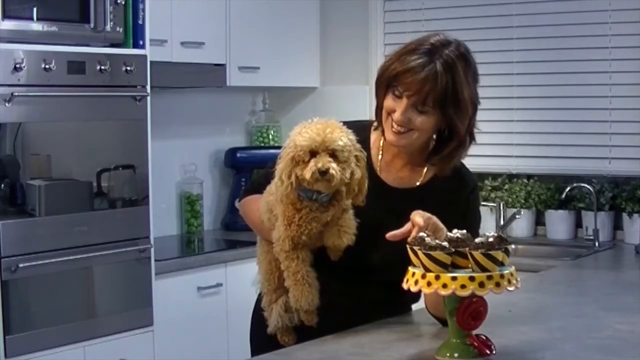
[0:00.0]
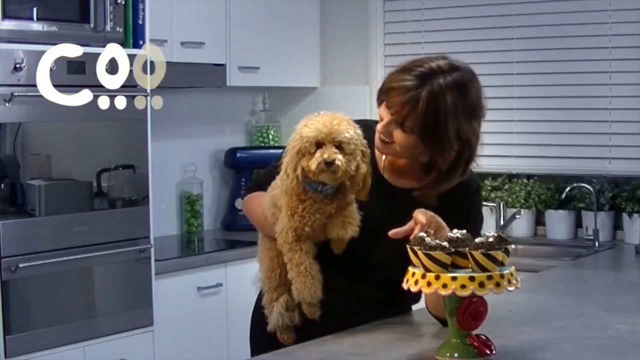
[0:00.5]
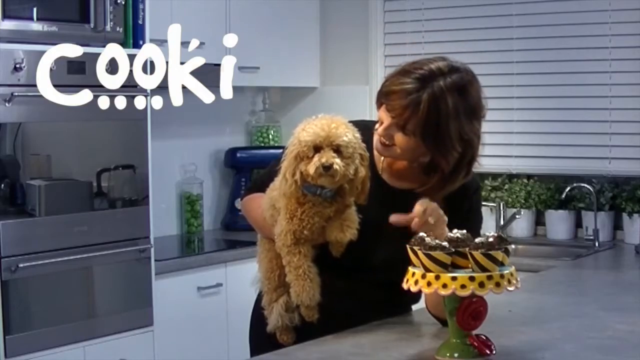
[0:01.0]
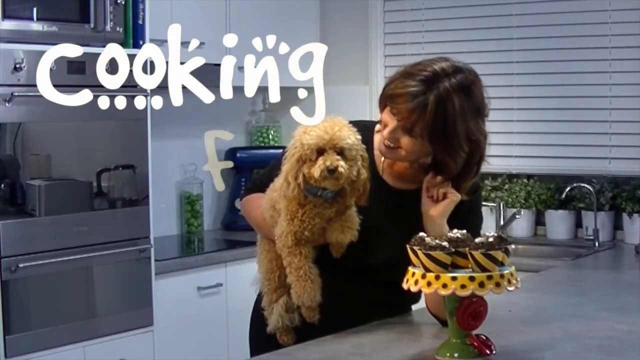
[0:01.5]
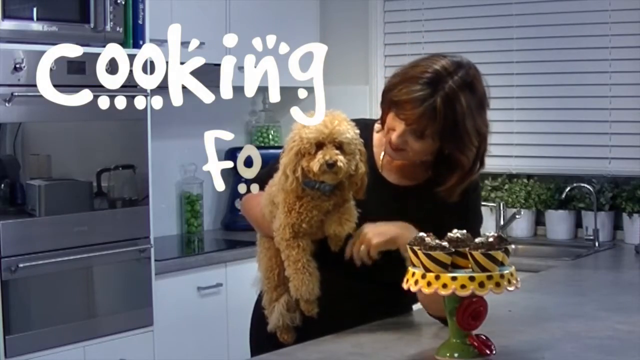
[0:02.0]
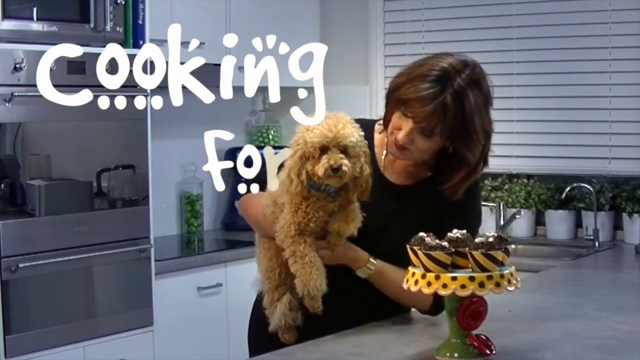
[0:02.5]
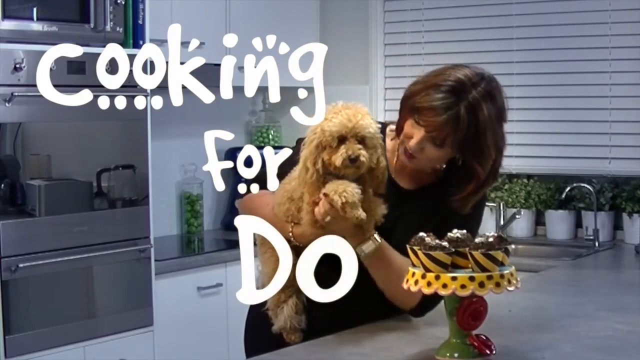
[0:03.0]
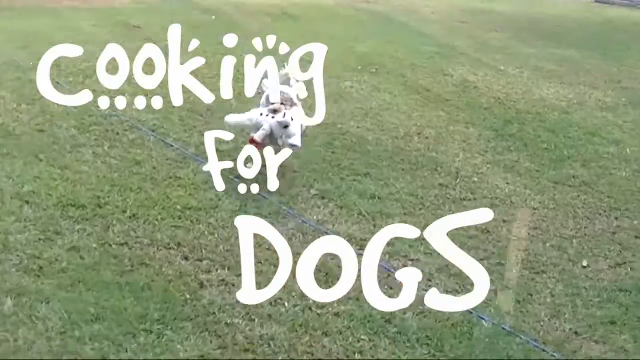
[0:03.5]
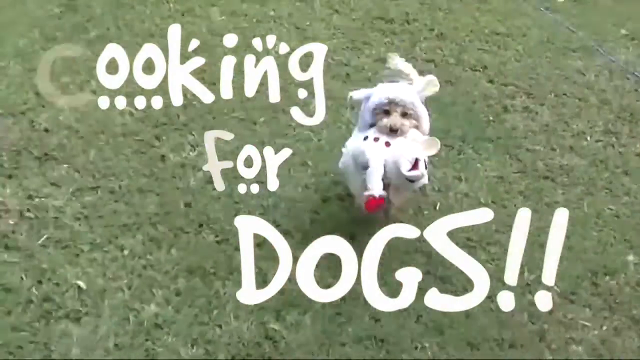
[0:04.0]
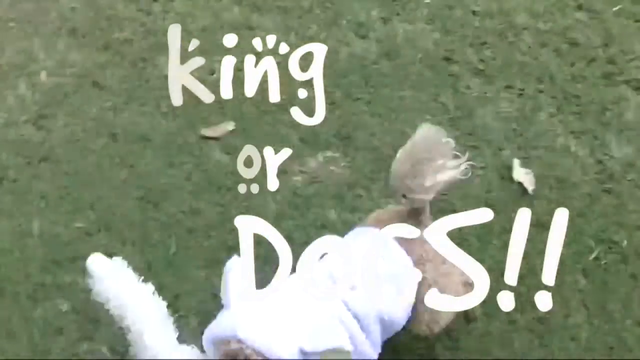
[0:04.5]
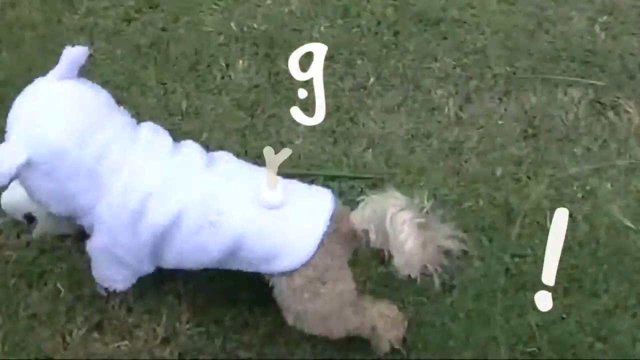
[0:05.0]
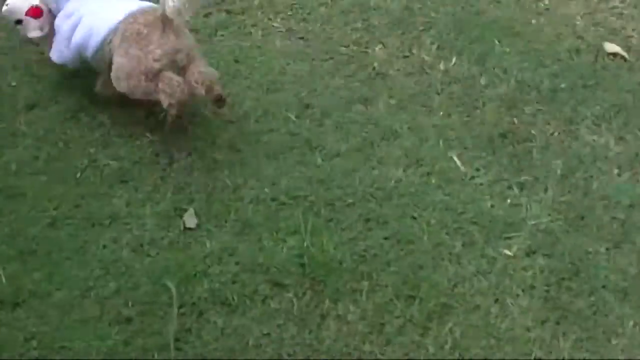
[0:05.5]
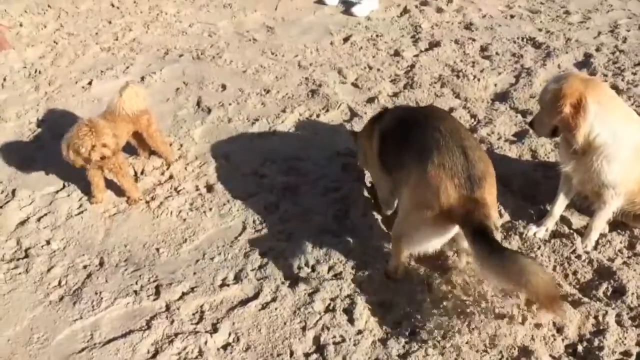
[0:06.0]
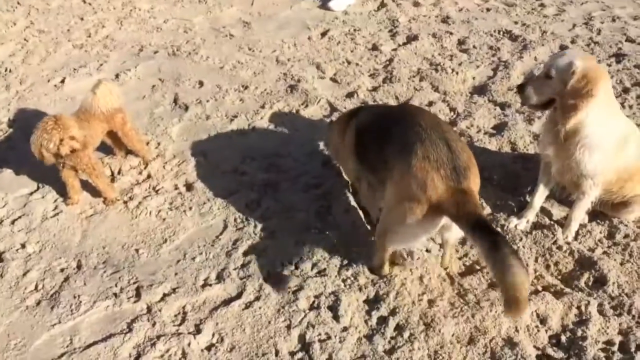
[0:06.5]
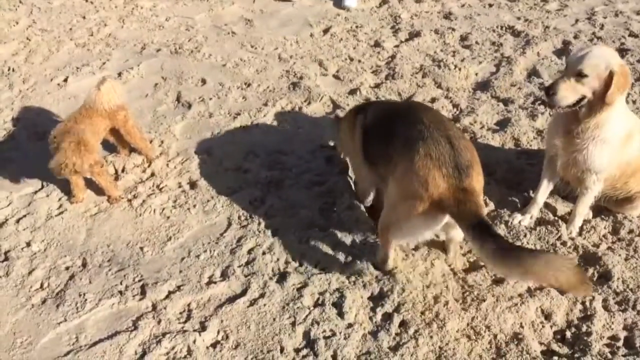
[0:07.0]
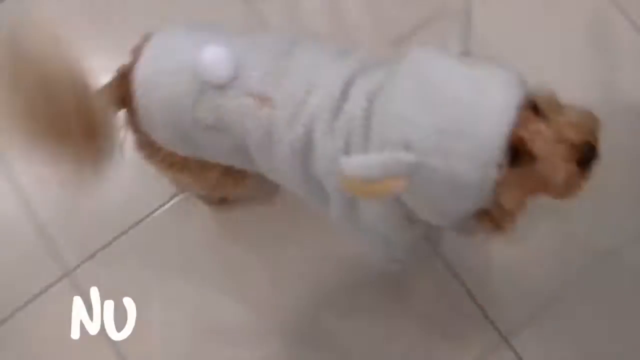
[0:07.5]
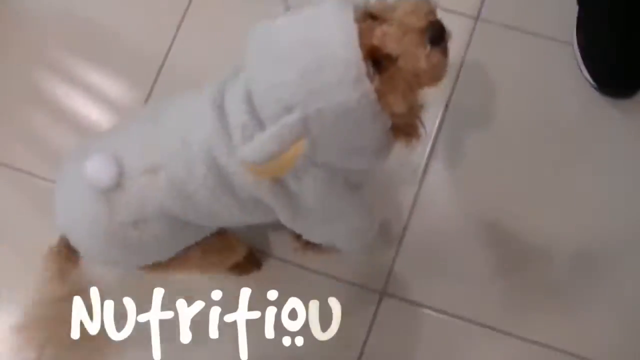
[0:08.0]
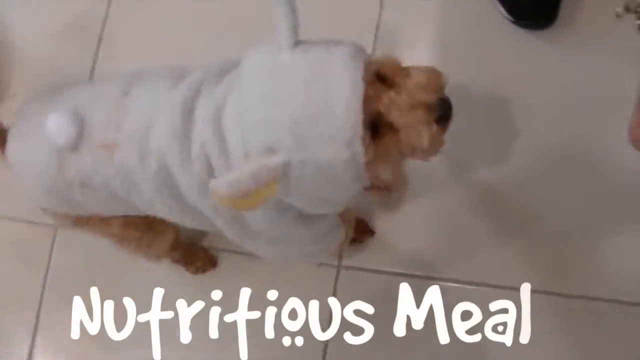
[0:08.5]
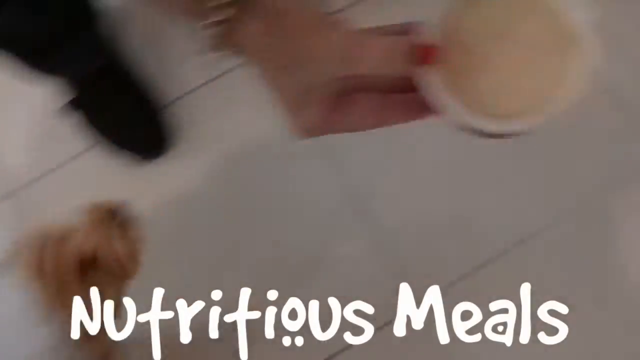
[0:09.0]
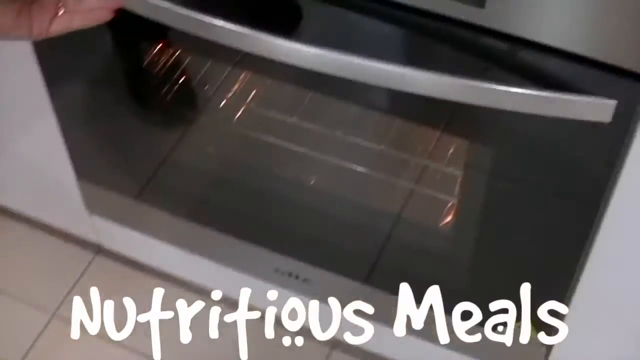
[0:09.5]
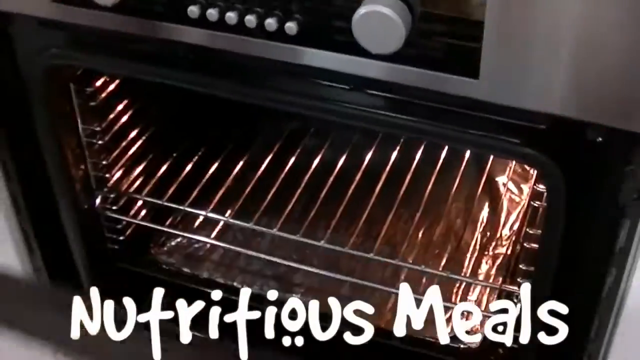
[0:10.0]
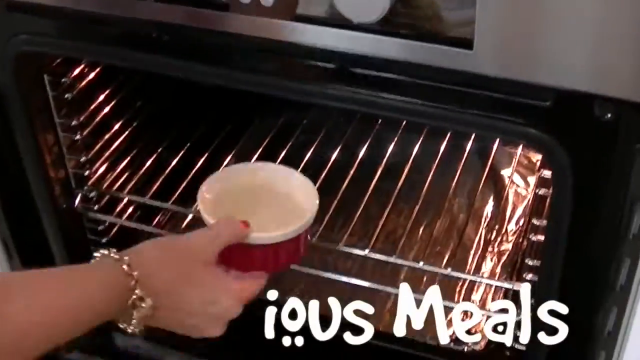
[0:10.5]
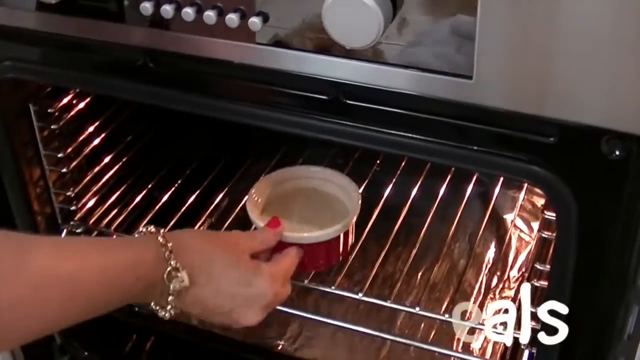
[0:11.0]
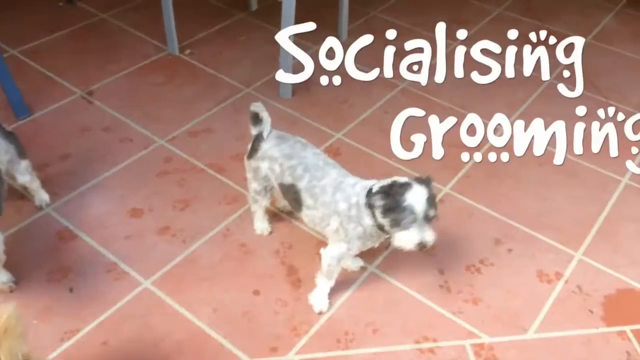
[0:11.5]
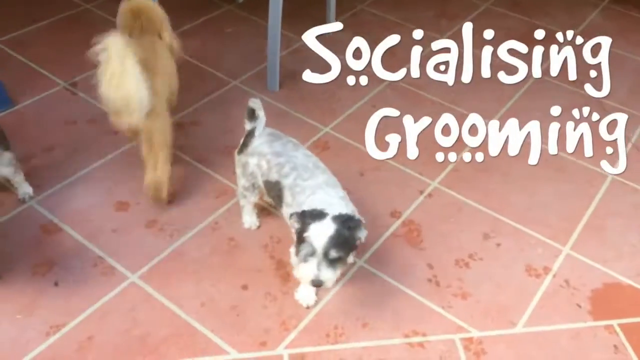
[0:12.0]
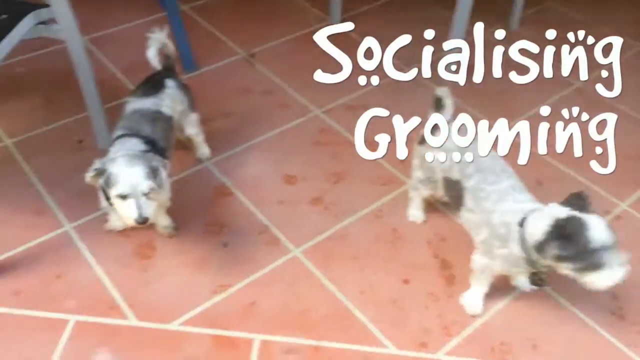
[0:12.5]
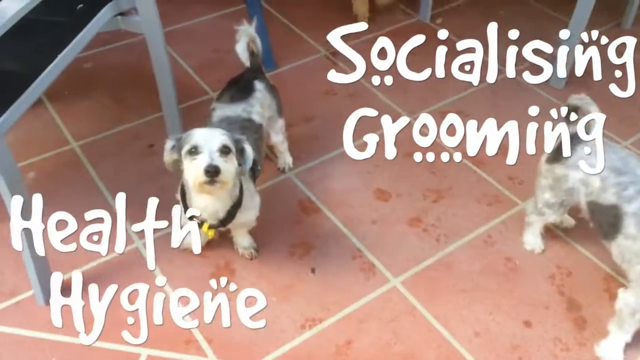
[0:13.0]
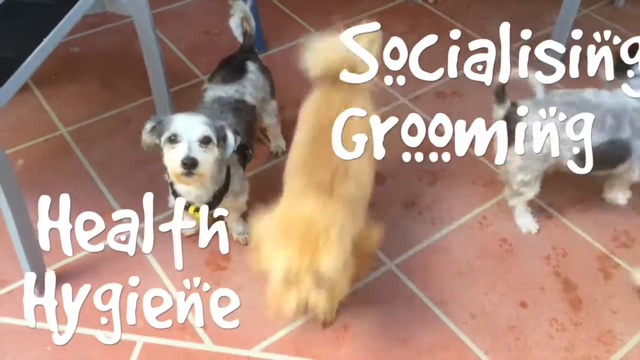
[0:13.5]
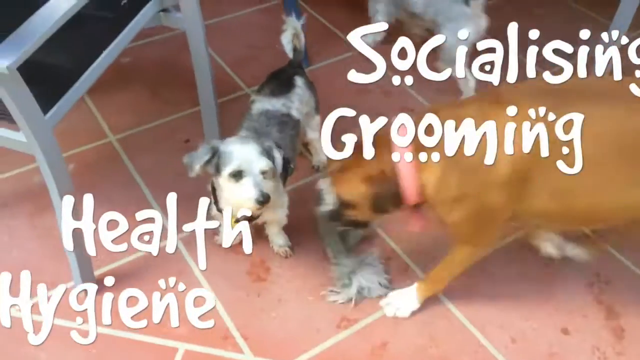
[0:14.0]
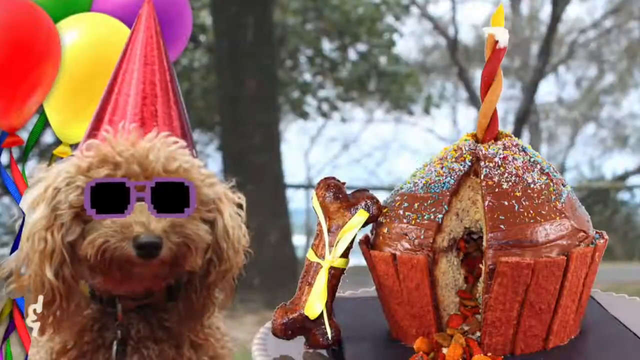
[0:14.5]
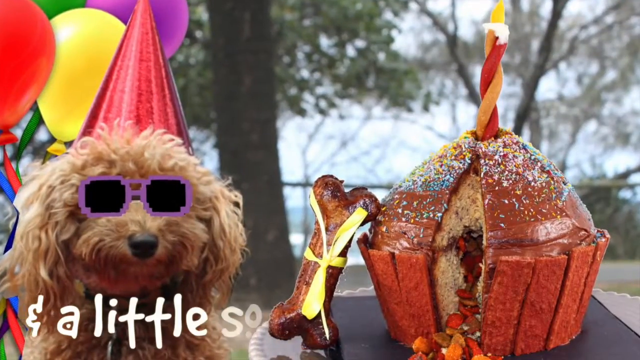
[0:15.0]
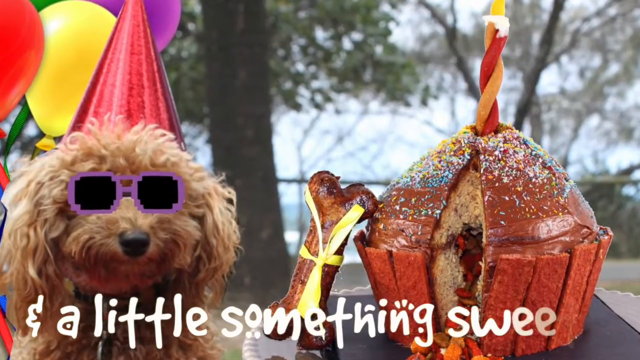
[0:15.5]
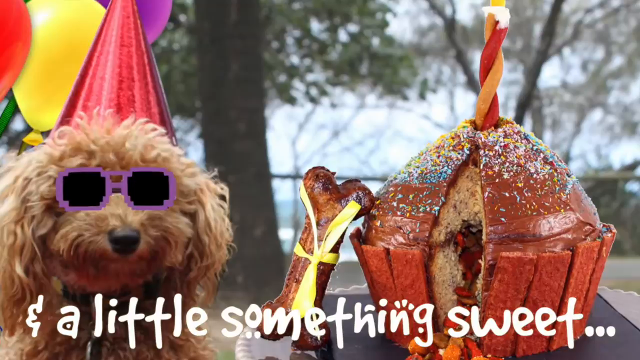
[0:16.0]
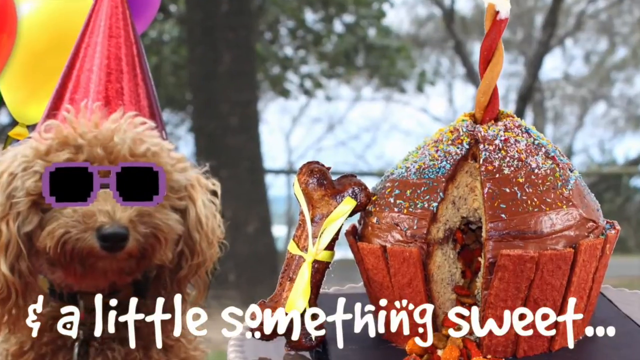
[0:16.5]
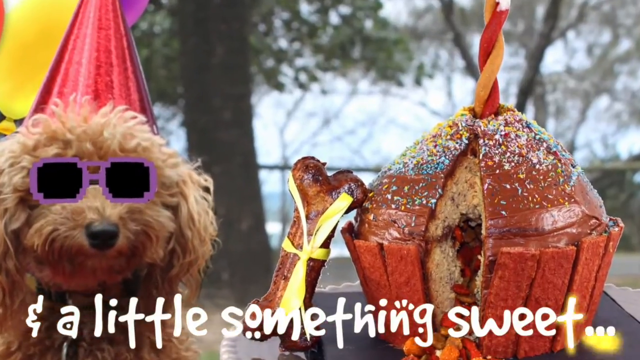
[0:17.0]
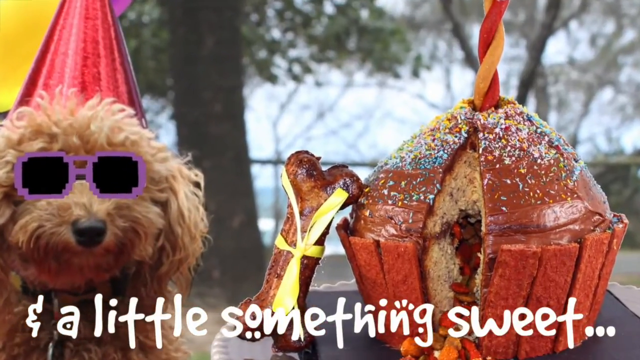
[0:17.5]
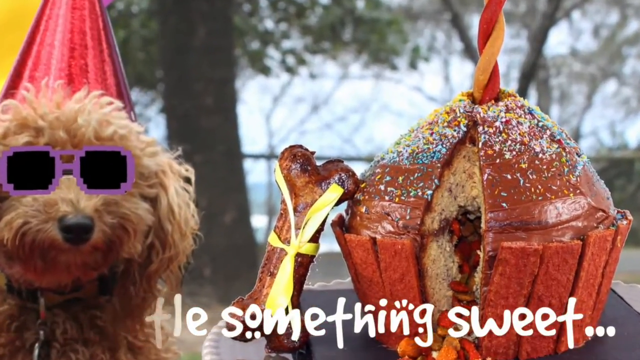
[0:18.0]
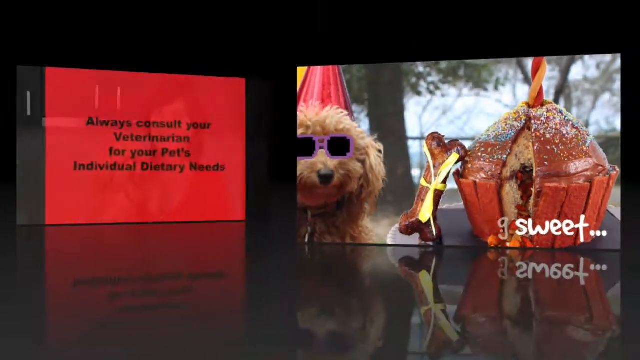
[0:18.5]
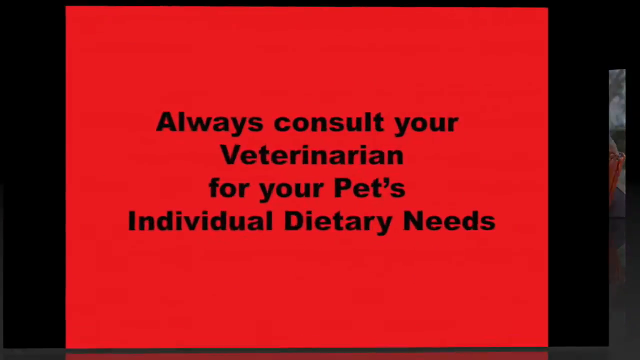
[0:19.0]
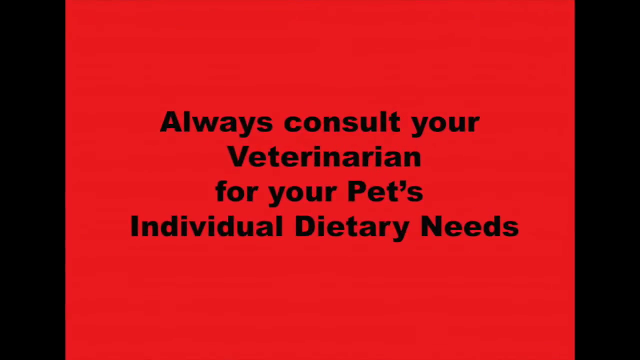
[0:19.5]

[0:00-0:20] A lady stands in a kitchen holding a dog in her arm; in front of them is a cake stand with some little chocolate cupcakes on it, which she points to, and the words "cooking for dogs" appear on the screen. The scene changes to a dog running around in a little white costume with a little toy in its mouth, in what looks to be a lawn. It then moves to a beach with three dogs, one of which is digging in the sand. Next comes a dog in a little white outfit in a kitchen, with the words "nutritious meals" beneath it, followed by a view of an oven where somebody is putting something in. The scene then changes to a couple of dogs outdoors on a patio area as the words "socialising, grooming and health hygiene" come up on the screen. Next is a little infographic of a dog with sunglasses drawn on him, a red party hat and balloons behind him; next to him is what looks to be a bone with a bow on it, and next to that what looks to be a cake with a candle in the top, appearing to be a large cupcake, as the words "a little something sweet" come up. Finally, an infographic with a red background appears with writing that says "always consult your veterinarian for your pet's individual dietary needs".